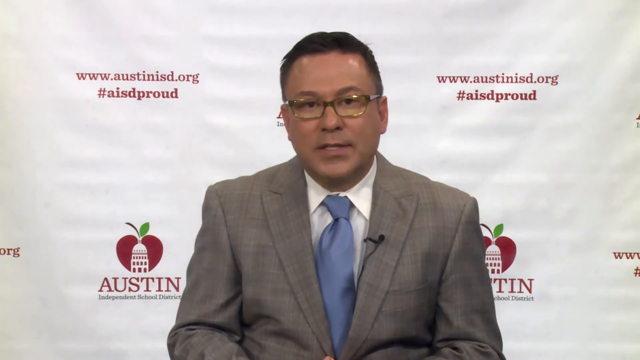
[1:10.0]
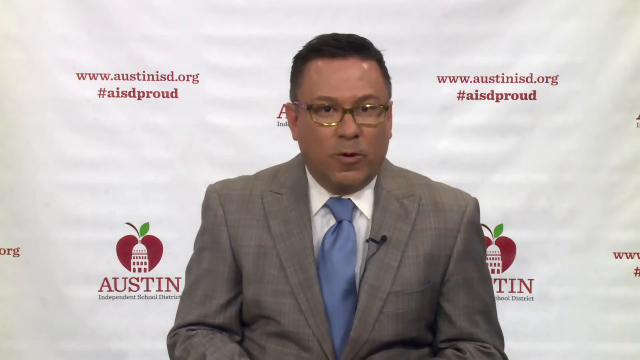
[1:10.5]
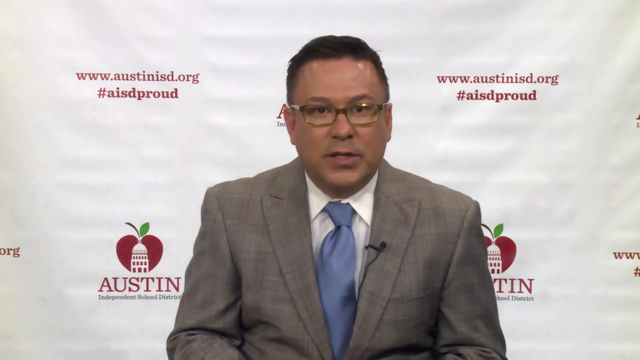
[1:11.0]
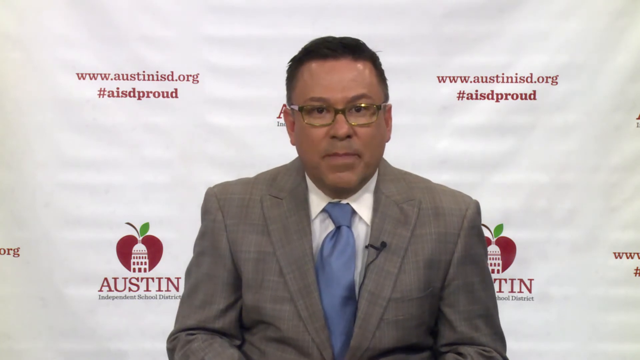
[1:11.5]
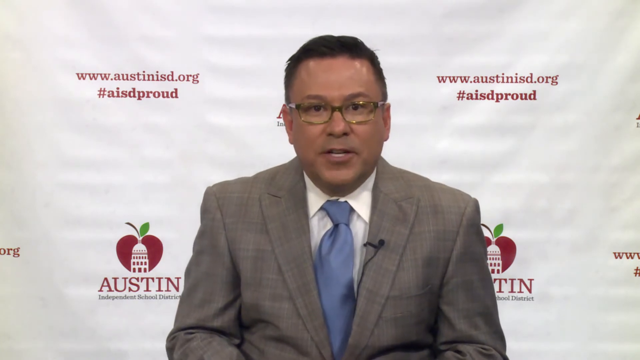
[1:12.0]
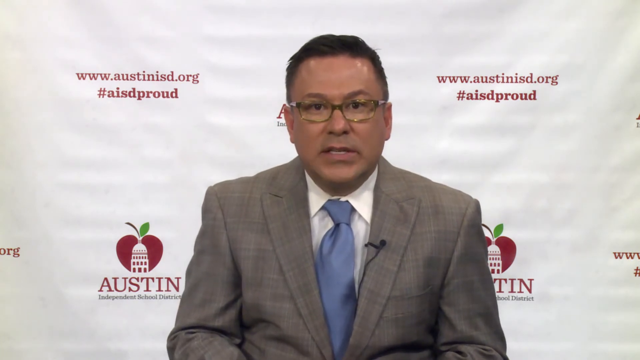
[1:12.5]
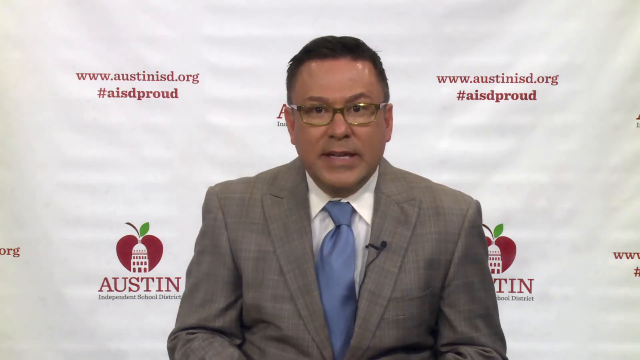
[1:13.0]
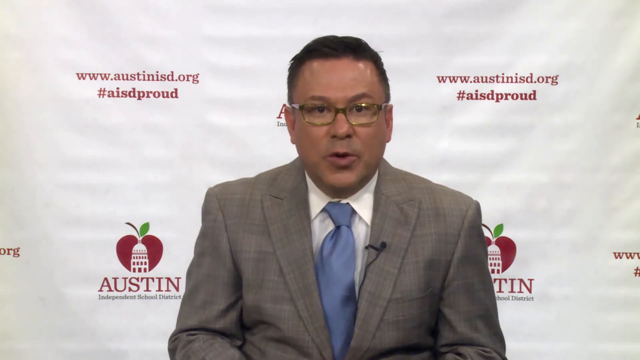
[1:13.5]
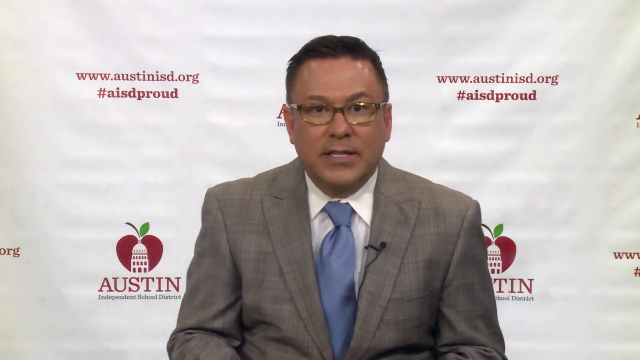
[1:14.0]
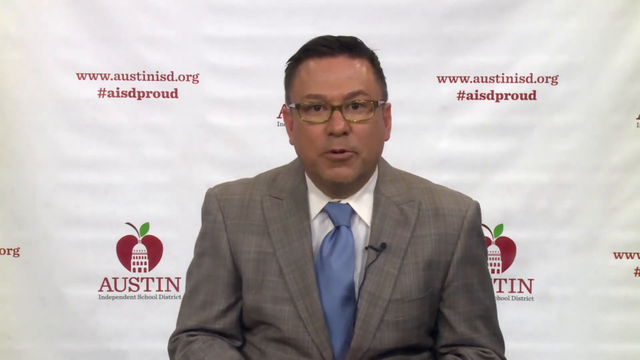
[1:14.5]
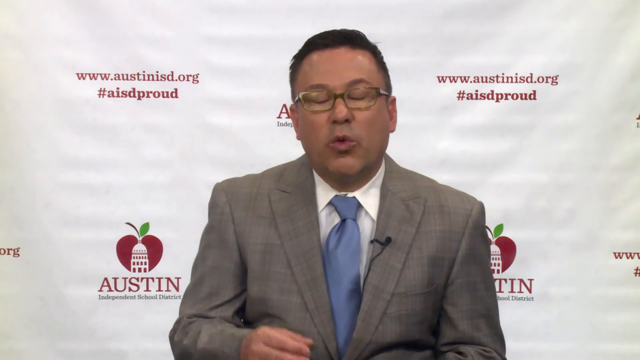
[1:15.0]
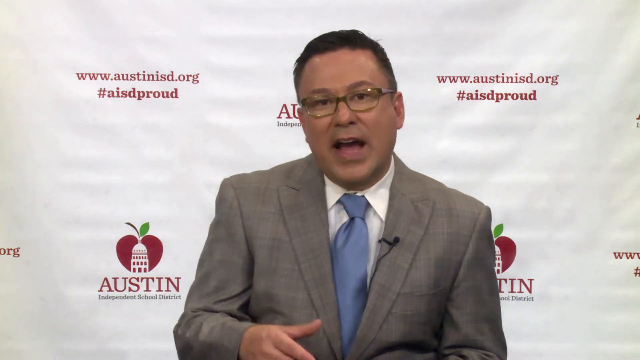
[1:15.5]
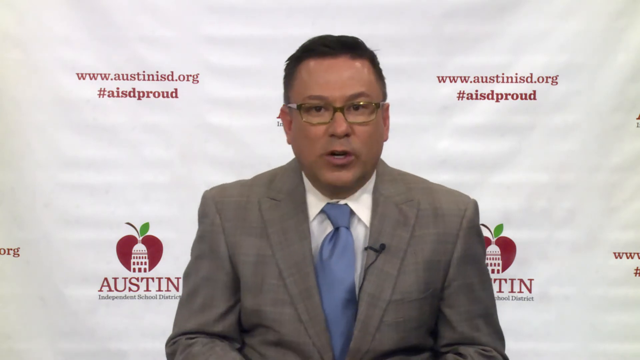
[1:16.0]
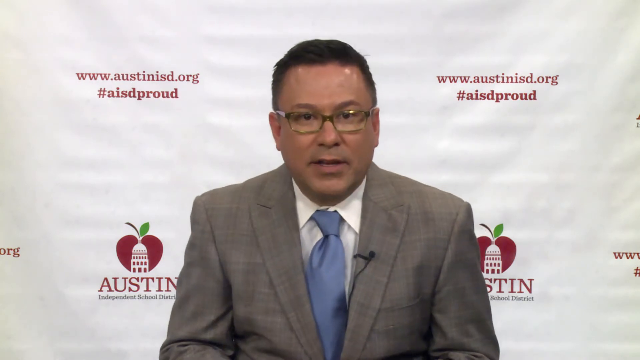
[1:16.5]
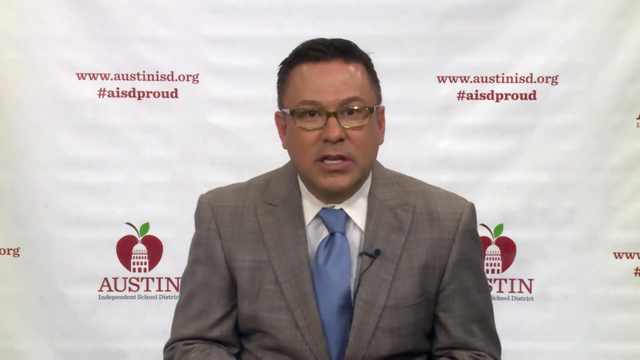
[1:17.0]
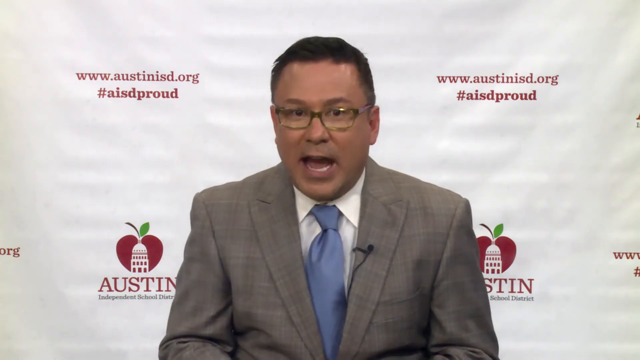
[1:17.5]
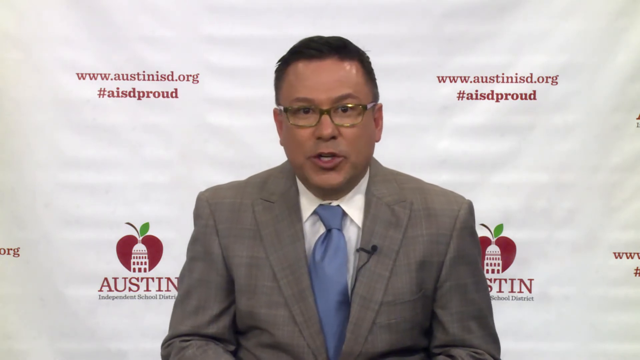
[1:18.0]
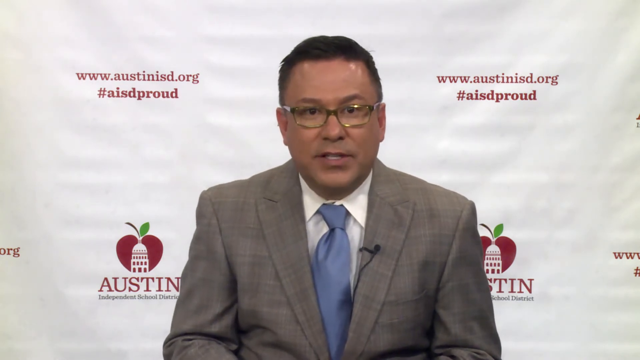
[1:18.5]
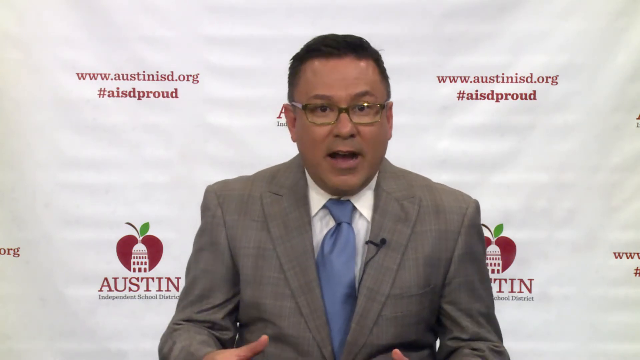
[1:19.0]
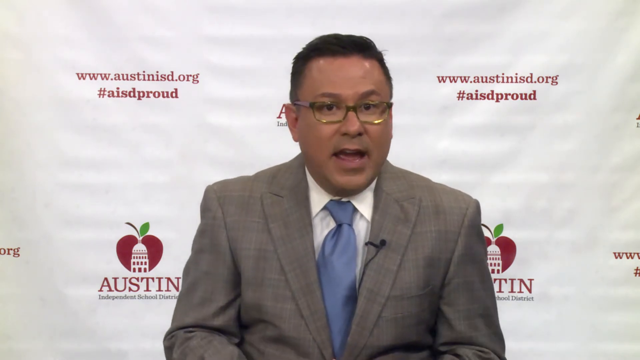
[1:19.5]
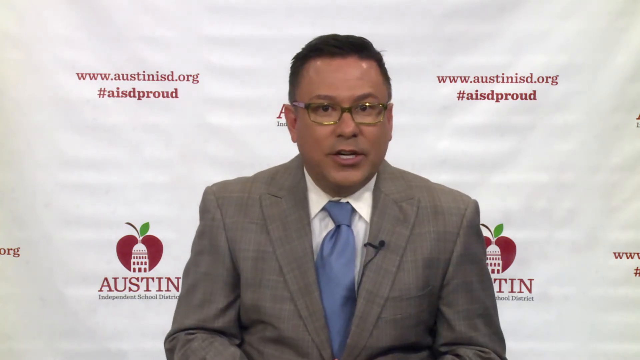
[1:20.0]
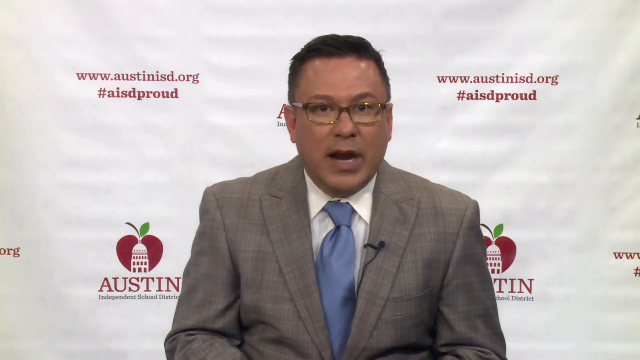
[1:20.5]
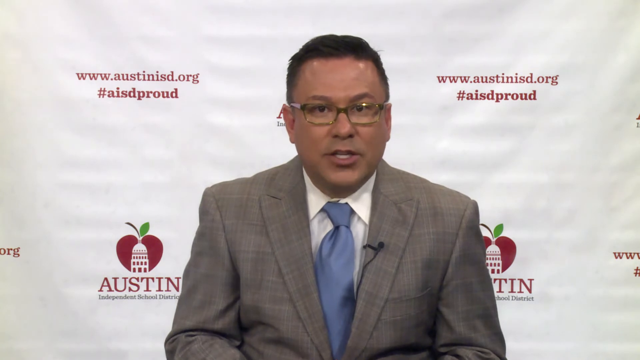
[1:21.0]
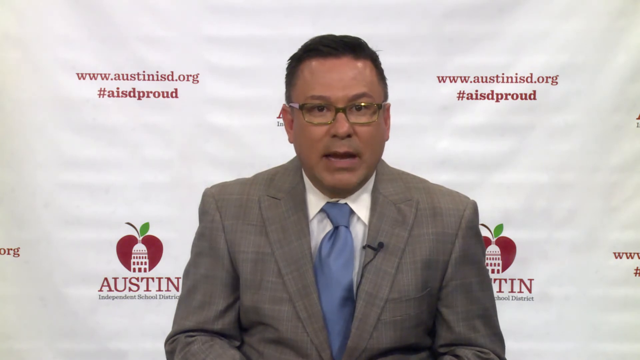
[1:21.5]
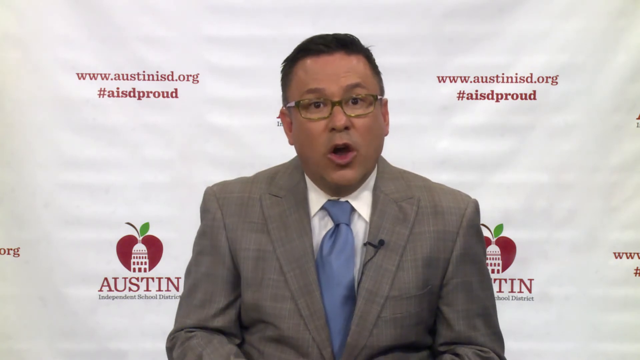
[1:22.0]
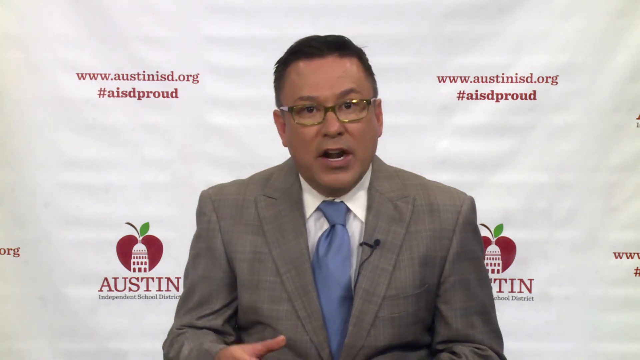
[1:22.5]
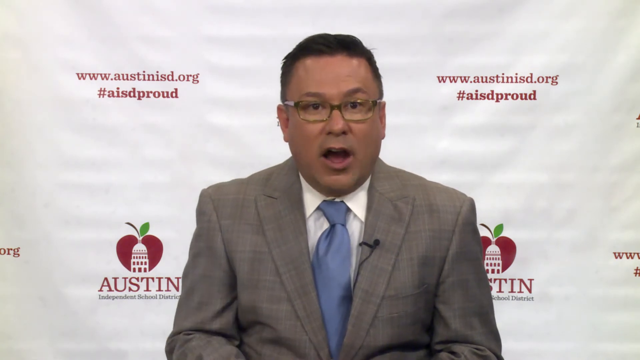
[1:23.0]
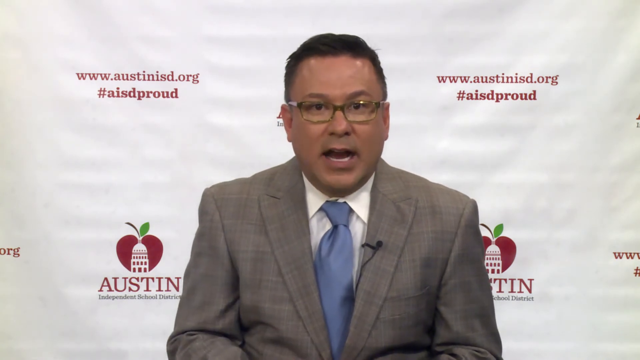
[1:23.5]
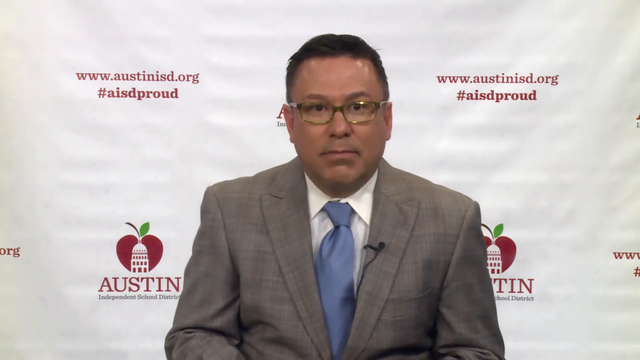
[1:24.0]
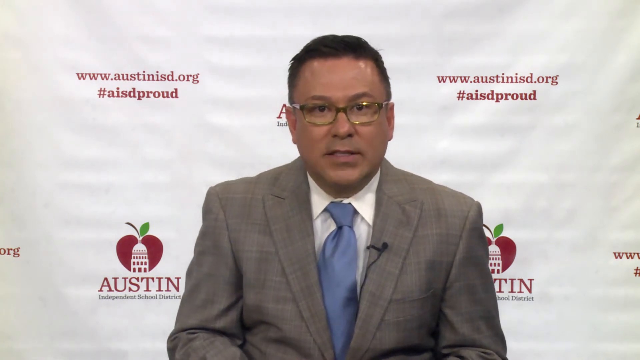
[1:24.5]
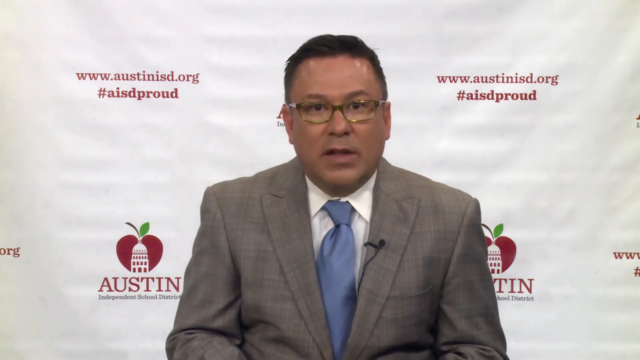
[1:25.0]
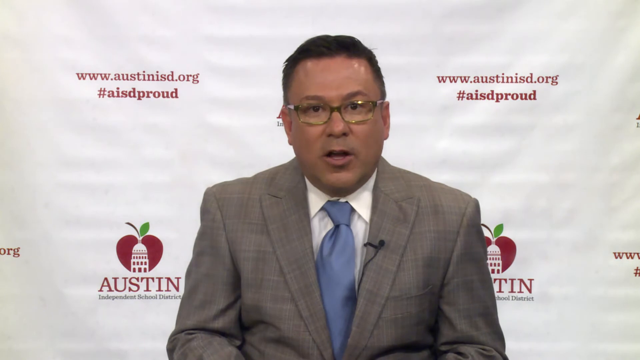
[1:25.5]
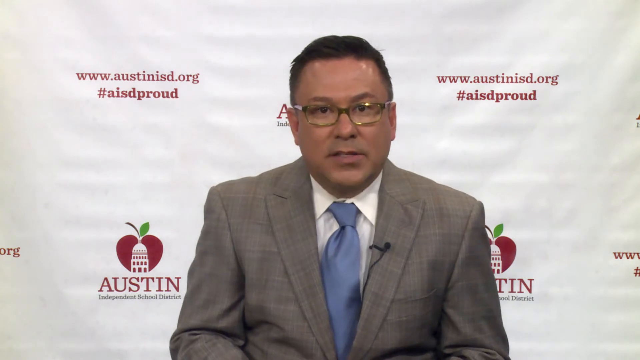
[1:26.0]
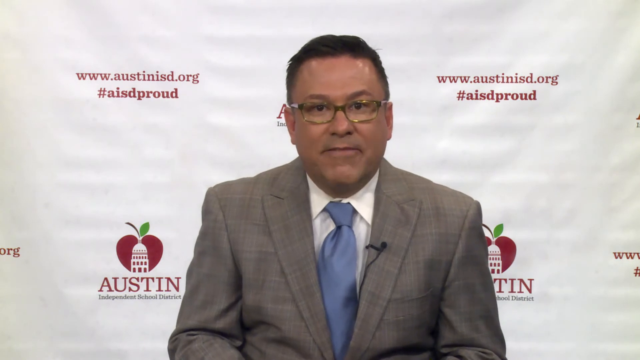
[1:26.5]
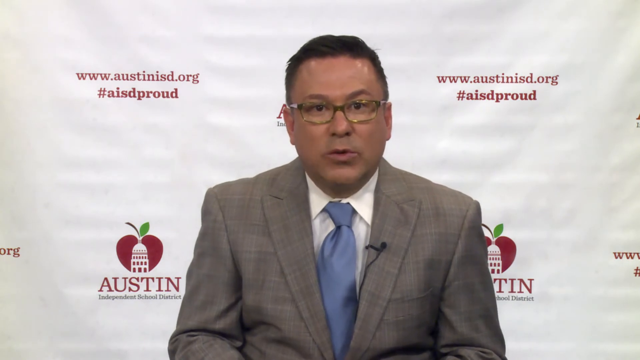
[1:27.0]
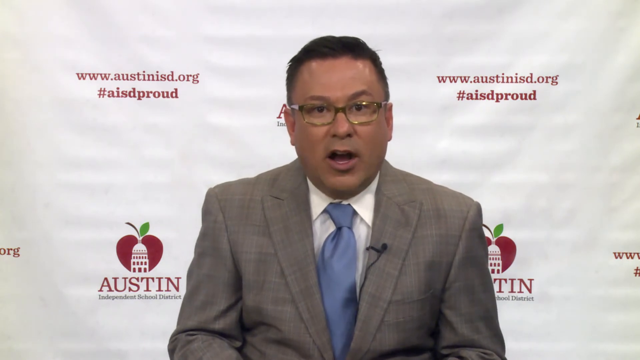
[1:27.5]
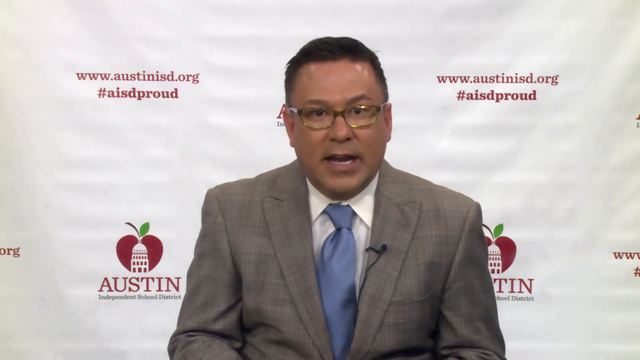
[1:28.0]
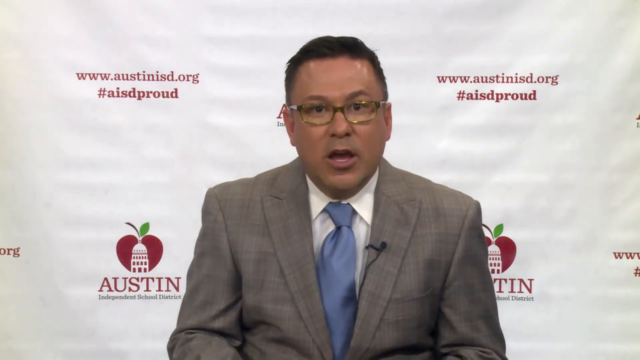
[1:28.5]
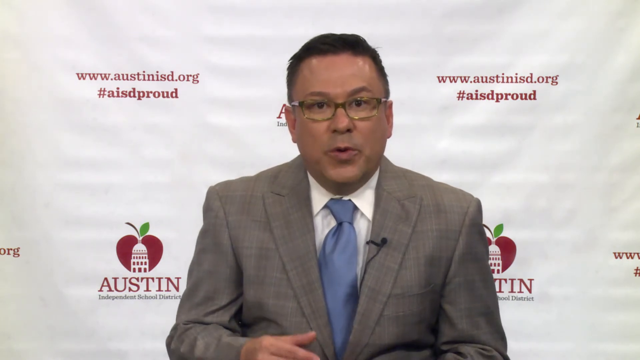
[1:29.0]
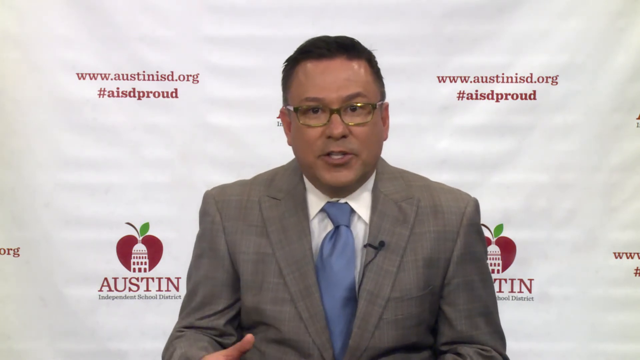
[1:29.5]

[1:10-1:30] A man talks in front of the camera, a microphone attached to his blazer or jacket, which is kind of gray. He wears a white shirt, a blue tie and glasses, and looks like a superintendent or something similar. The background behind him is white and reads "Austin Independent School District, AISD." He apparently wears a wedding ring. He talks with his hands a little and seems somewhat animated, and he takes up most of the frame as he keeps talking.